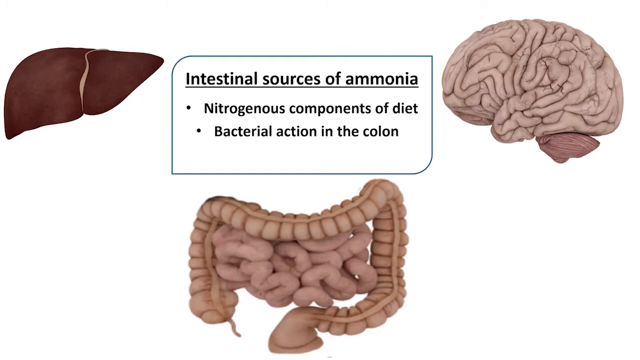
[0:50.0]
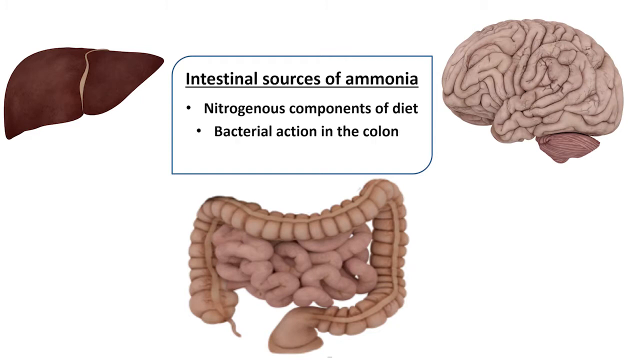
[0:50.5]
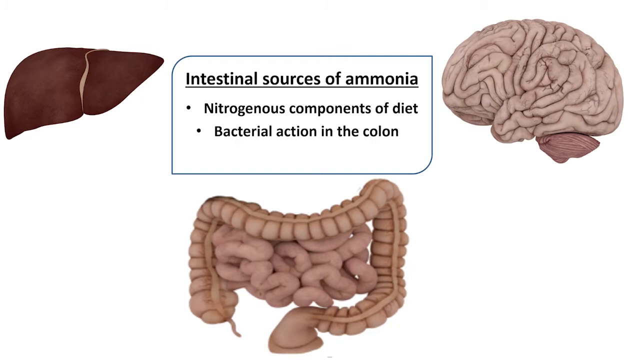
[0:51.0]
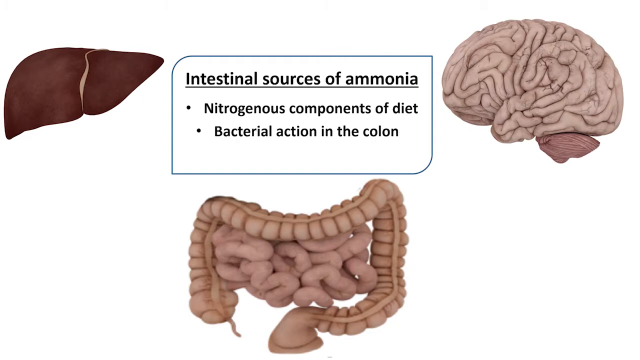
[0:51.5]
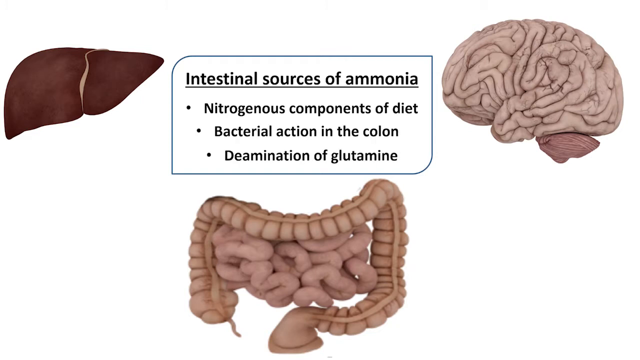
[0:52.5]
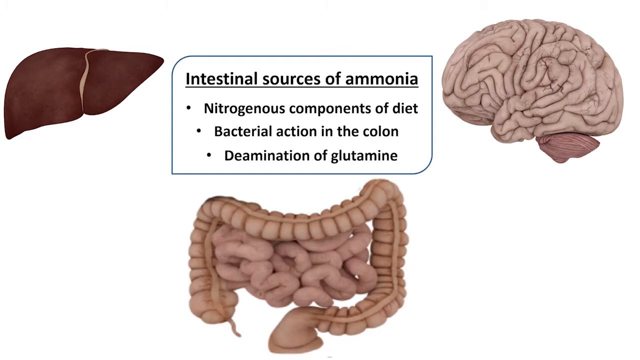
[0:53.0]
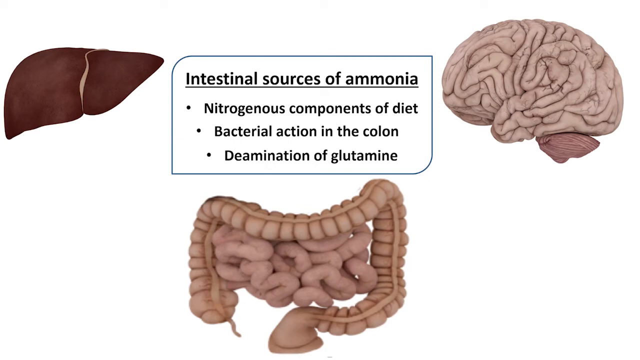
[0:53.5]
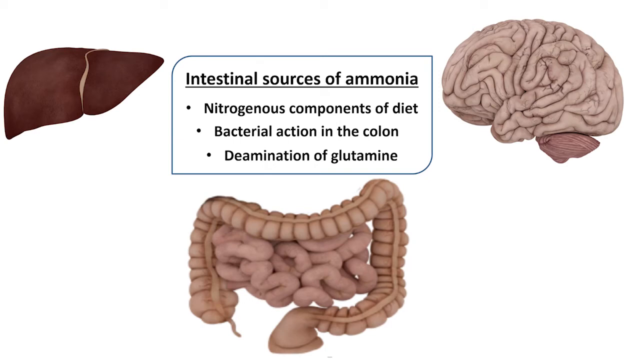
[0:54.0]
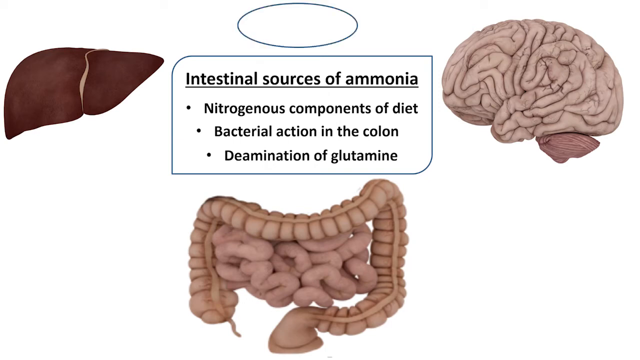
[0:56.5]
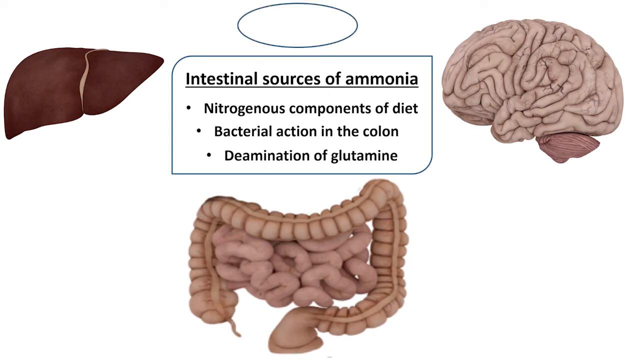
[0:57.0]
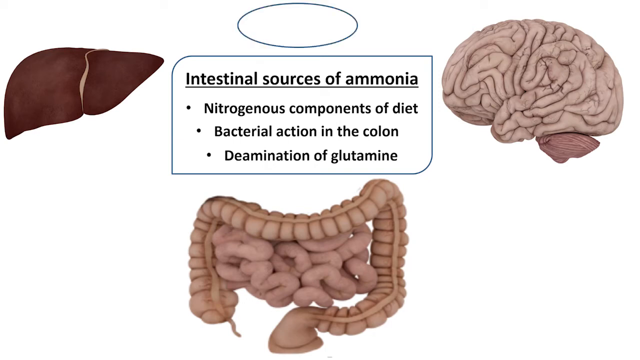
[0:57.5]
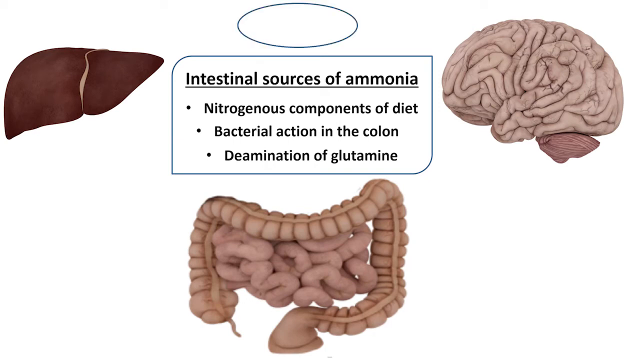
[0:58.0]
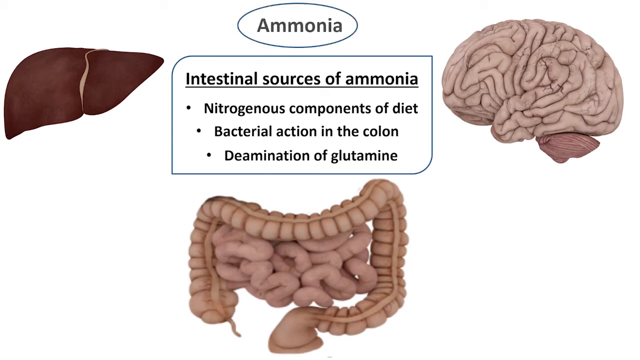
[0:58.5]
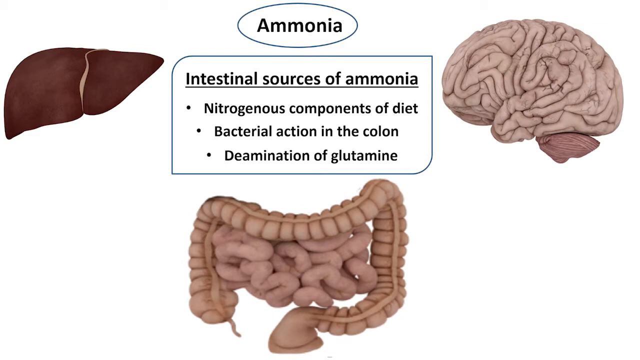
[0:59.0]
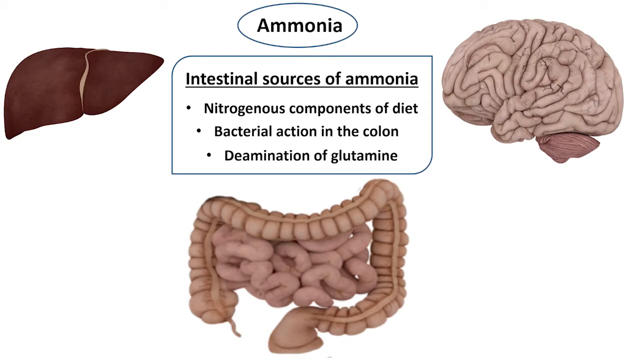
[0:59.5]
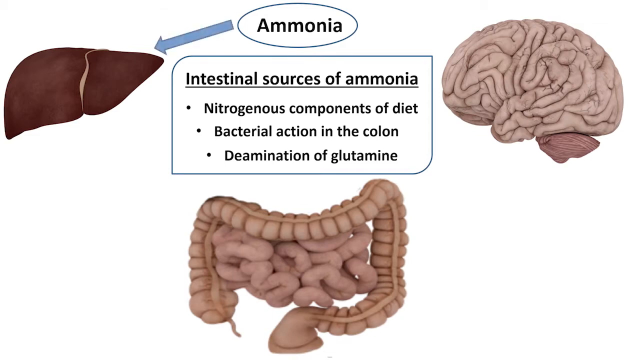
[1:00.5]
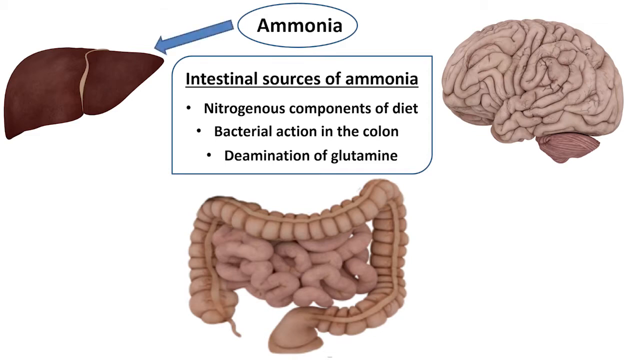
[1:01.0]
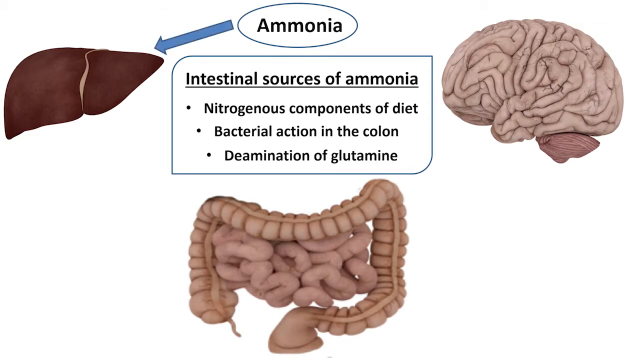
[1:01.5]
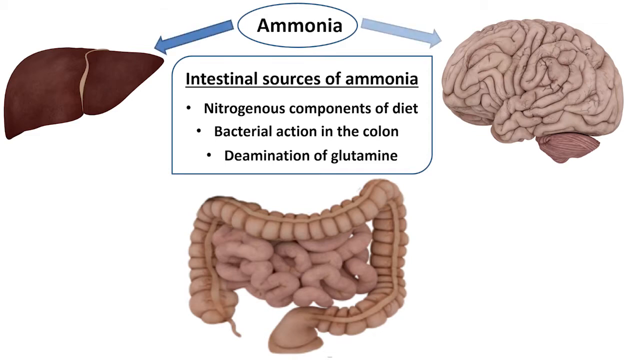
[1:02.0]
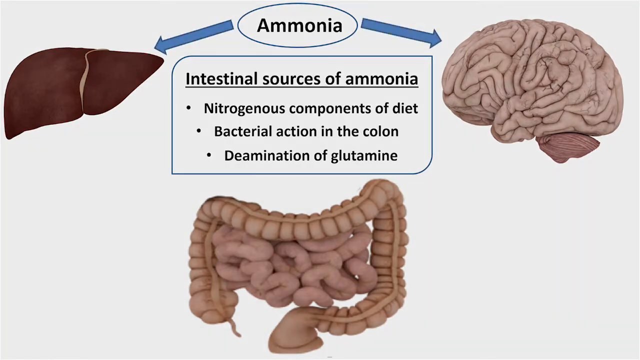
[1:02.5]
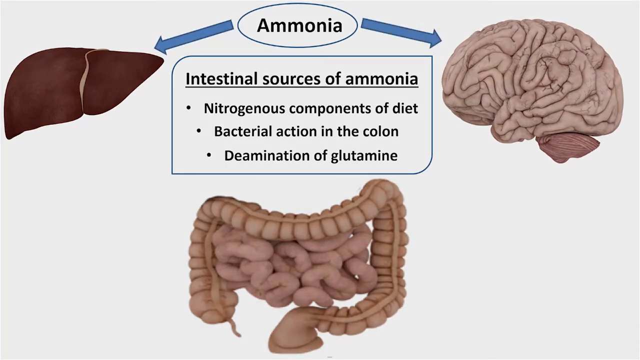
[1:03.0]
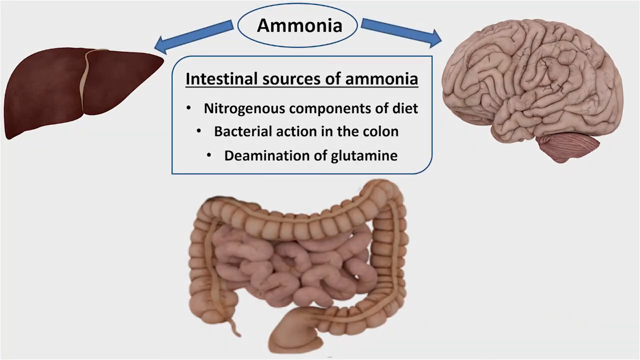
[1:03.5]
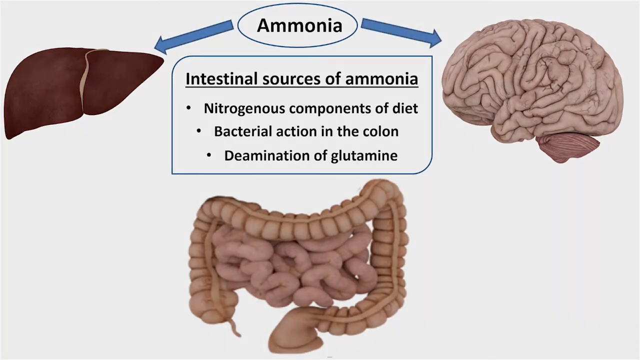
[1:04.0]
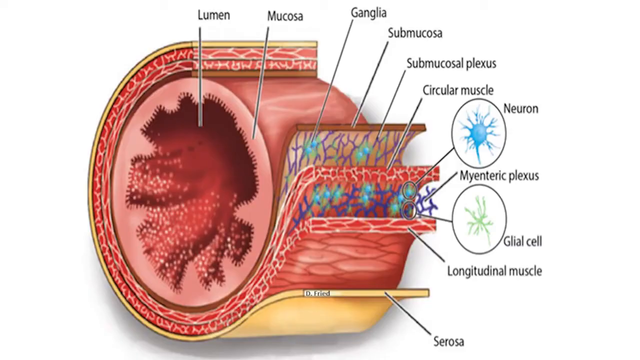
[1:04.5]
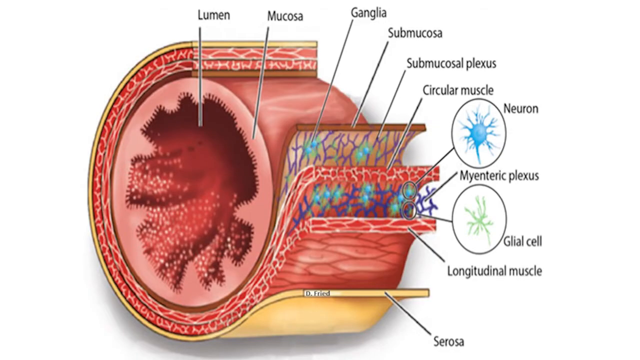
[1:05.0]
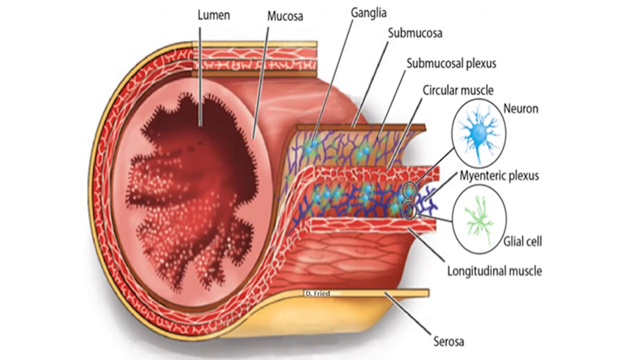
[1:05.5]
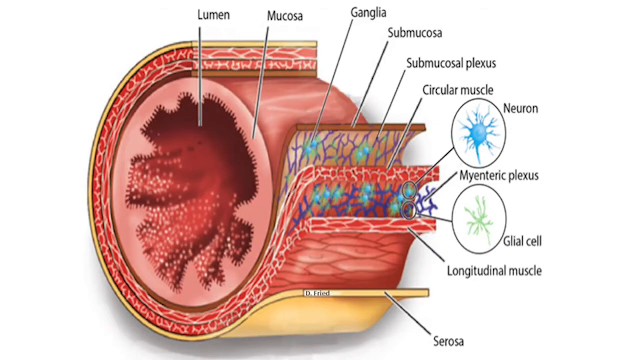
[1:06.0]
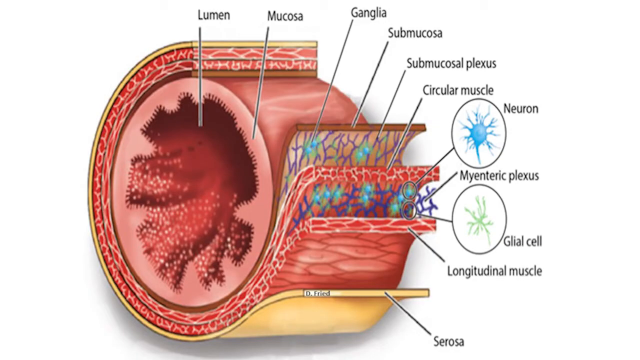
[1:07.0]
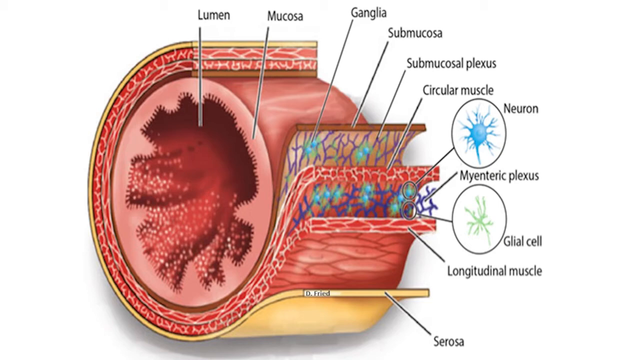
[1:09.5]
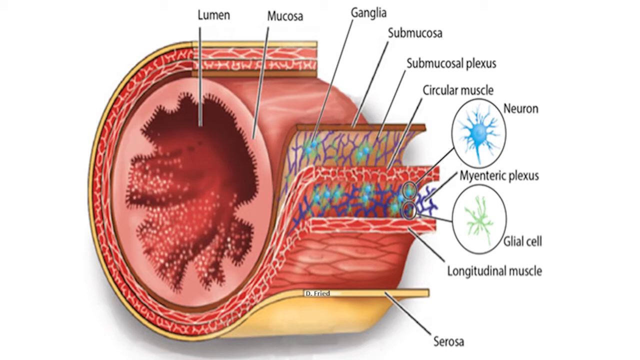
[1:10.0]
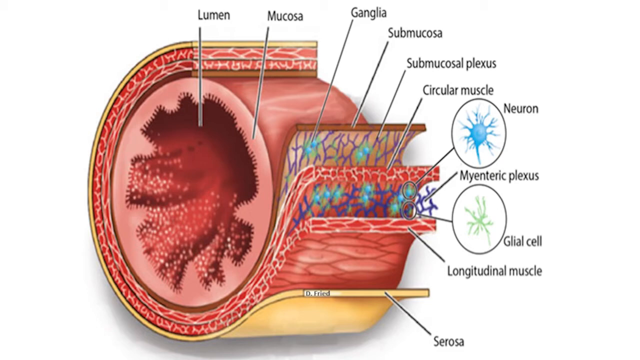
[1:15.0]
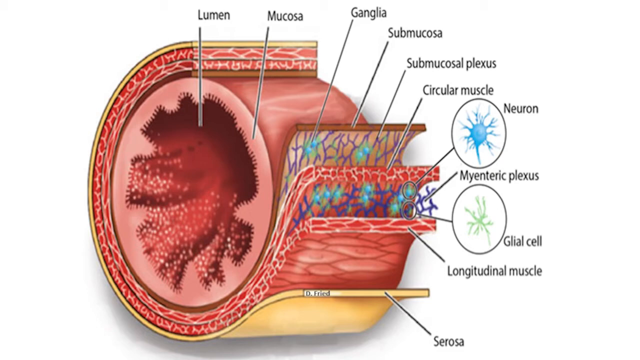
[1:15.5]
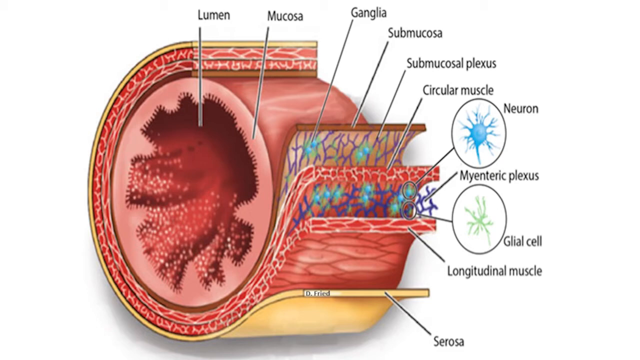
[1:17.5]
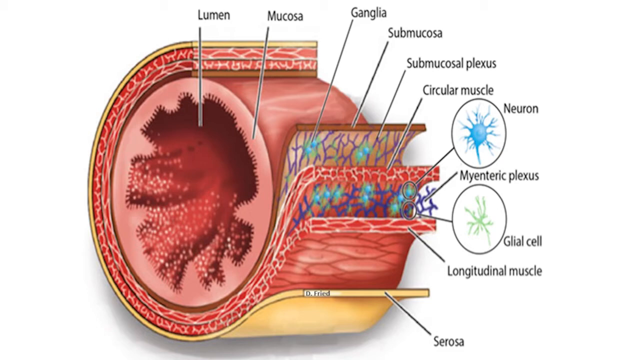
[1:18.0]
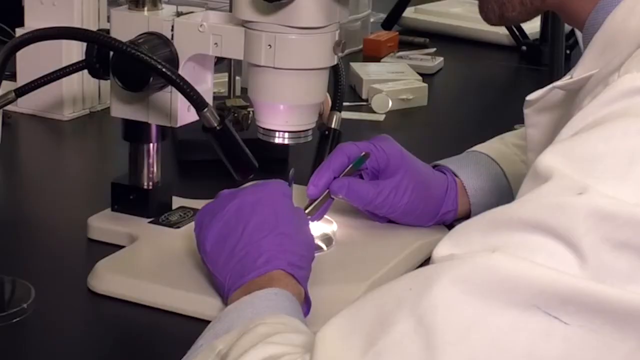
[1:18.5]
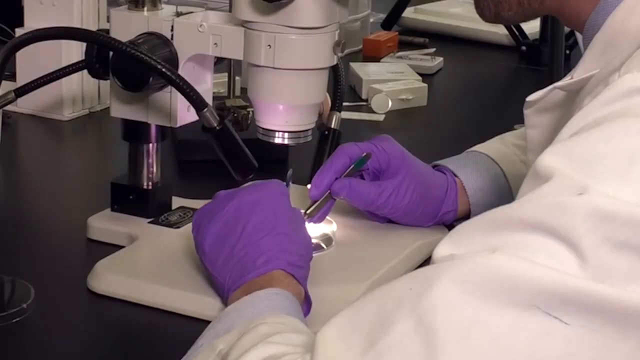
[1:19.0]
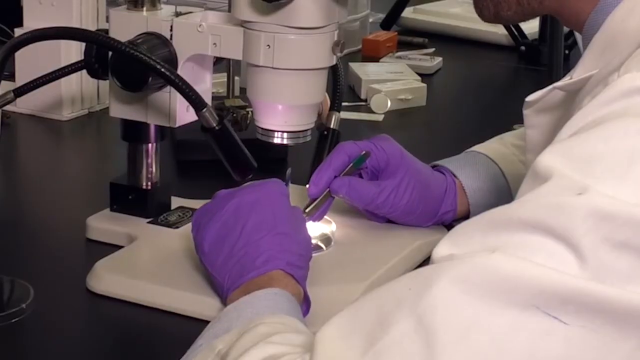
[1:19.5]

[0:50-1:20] A graphic on the screen has a box in the middle titled "intestinal sources of ammonia" with the bullet points "nitrogenous components of diet" and "bacterial action in the colon." A human liver is pictured at the top left of the screen, a human brain at the top right, and at the bottom is a representation of the human intestinal system with the intestines and the colon. The words "deamination of glutamine" then come up in the box at the centre. An oval shape appears at the top of the screen with the word "ammonia" written in it. A blue arrow points to the liver and to the brain. Next comes a graphic that seems to be a cross-section of part of the body, with the sections labelled lumen, mucosa, ganglia, submucosa, submucosal plexus, circular muscle, myenteric plexus and longitudinal muscle.